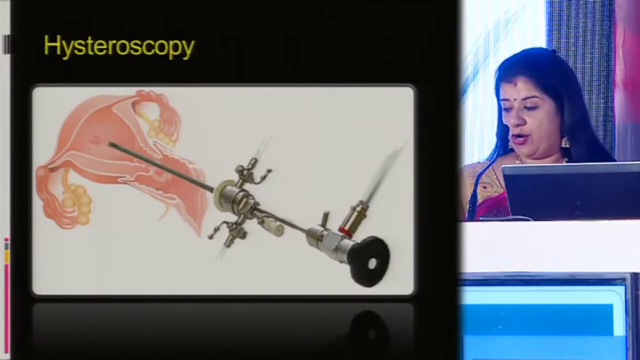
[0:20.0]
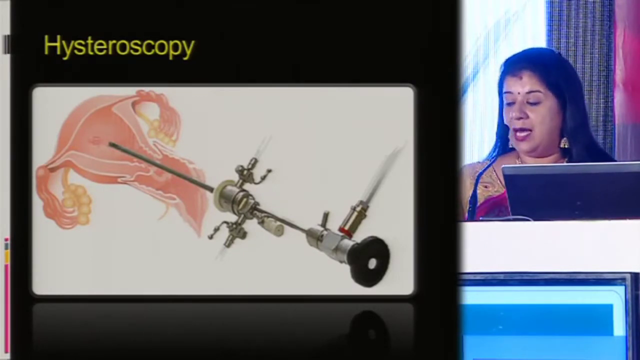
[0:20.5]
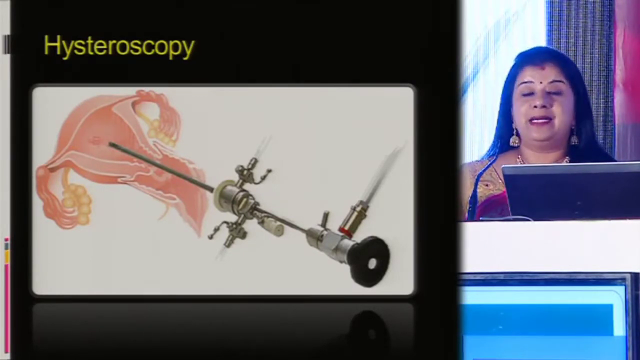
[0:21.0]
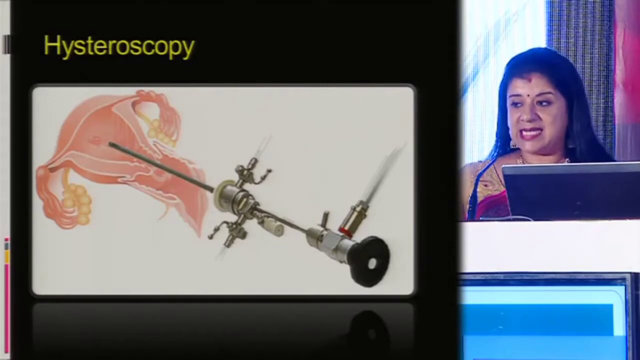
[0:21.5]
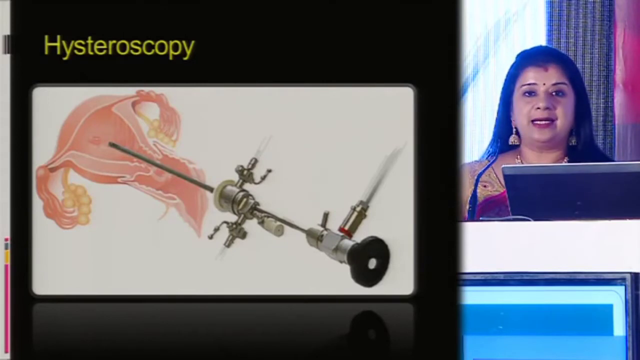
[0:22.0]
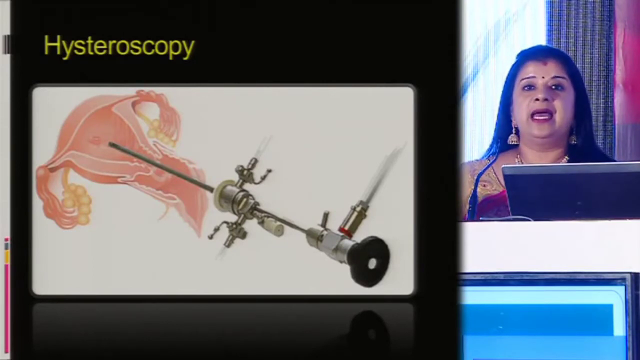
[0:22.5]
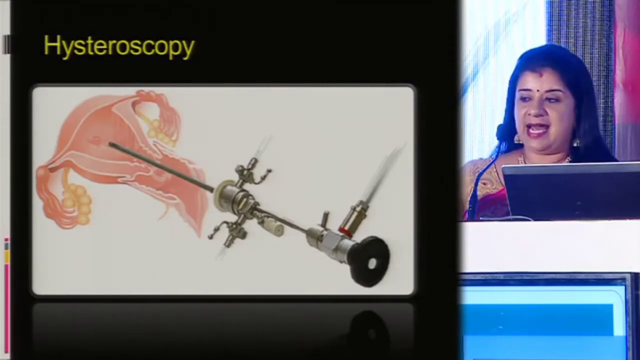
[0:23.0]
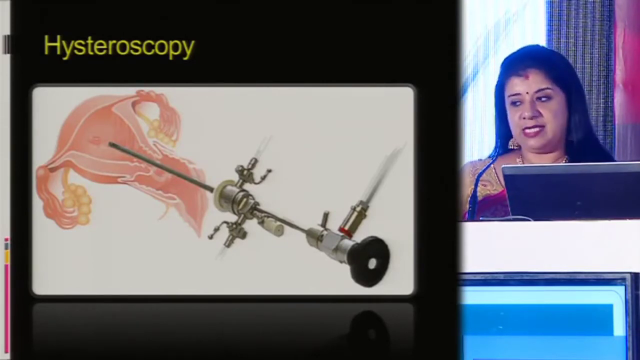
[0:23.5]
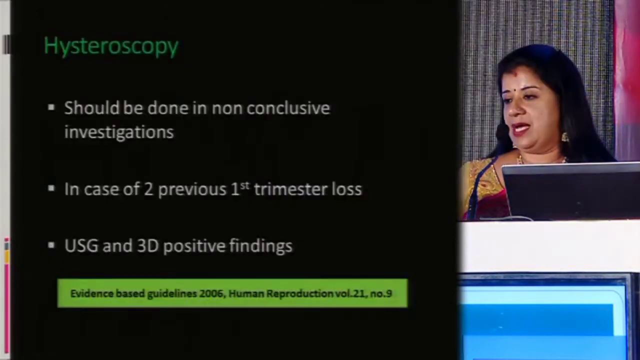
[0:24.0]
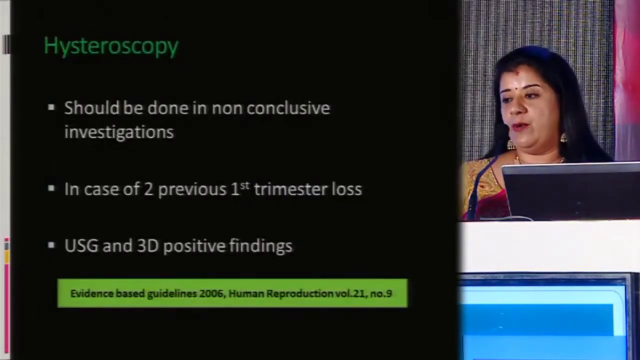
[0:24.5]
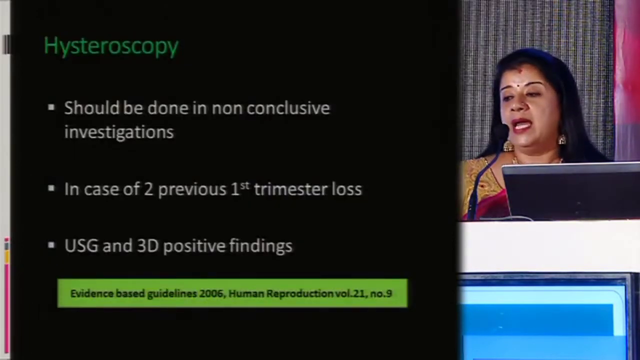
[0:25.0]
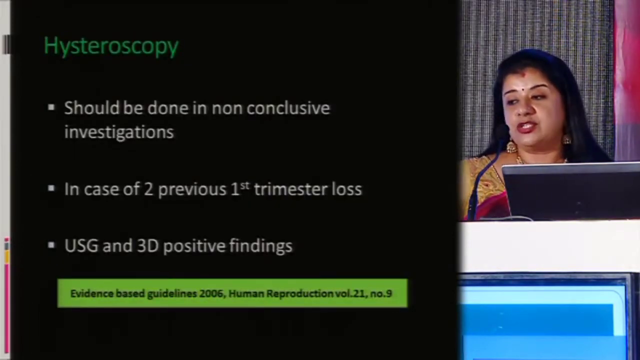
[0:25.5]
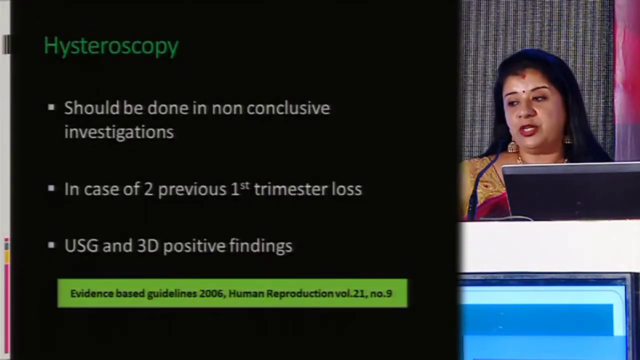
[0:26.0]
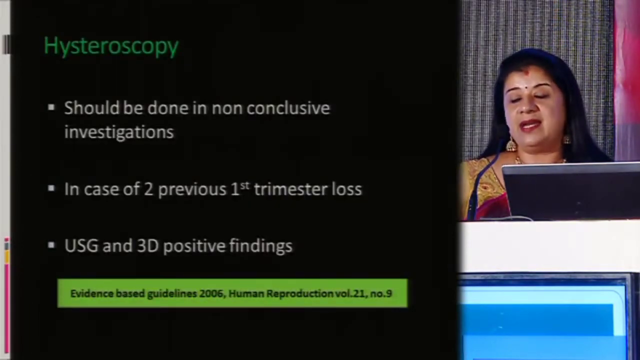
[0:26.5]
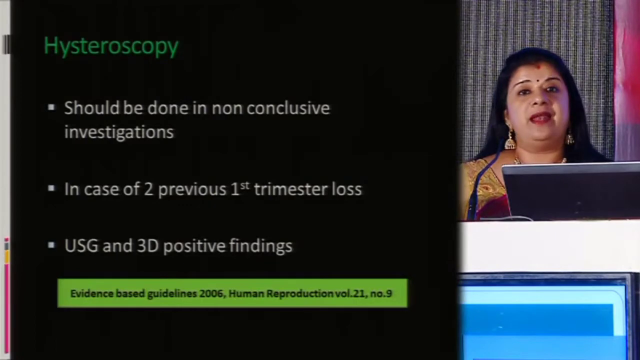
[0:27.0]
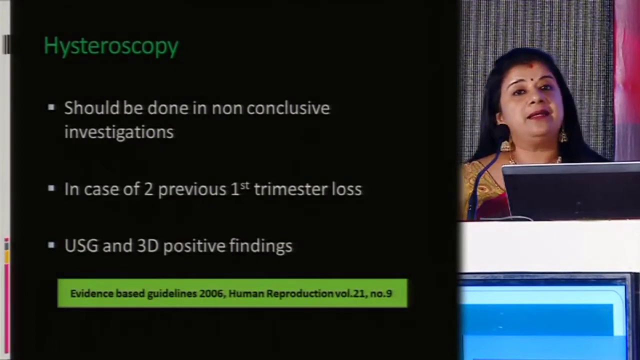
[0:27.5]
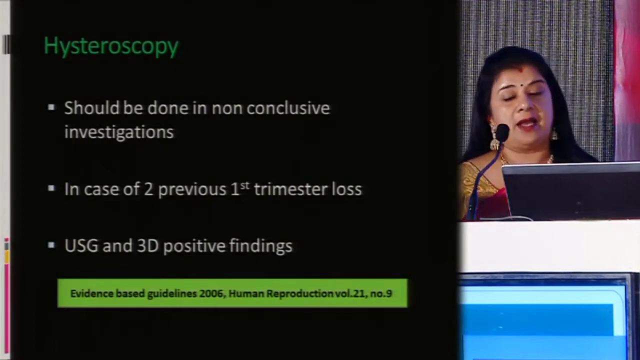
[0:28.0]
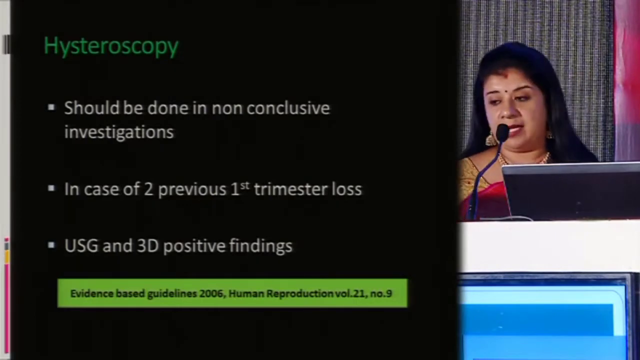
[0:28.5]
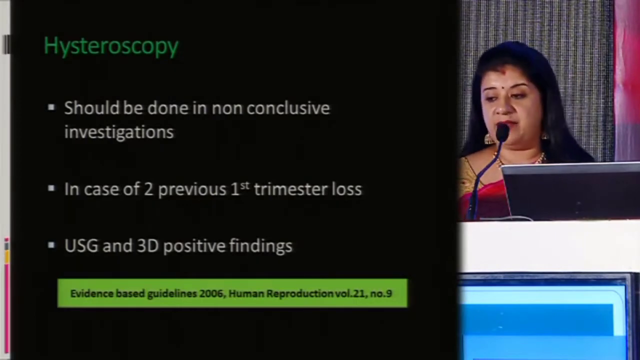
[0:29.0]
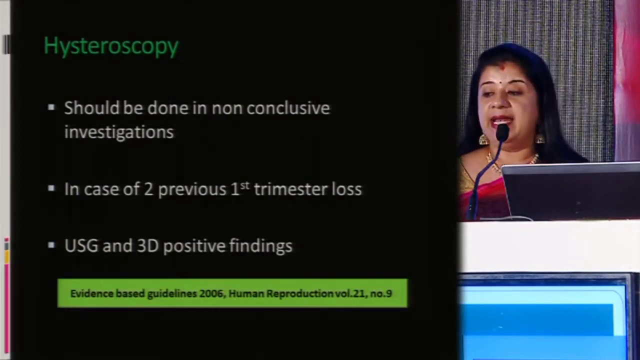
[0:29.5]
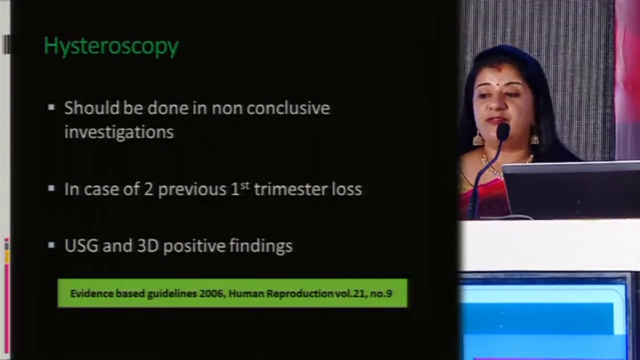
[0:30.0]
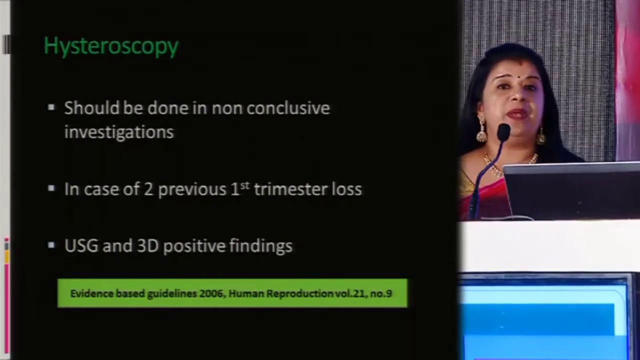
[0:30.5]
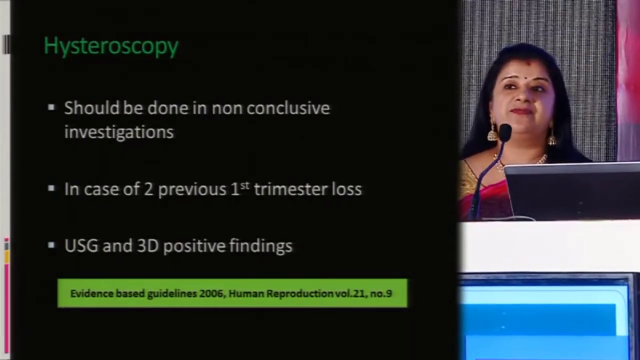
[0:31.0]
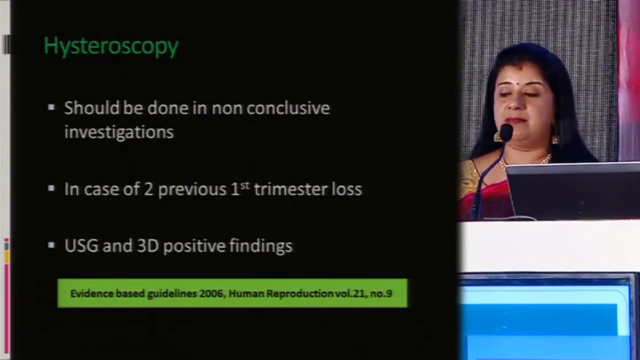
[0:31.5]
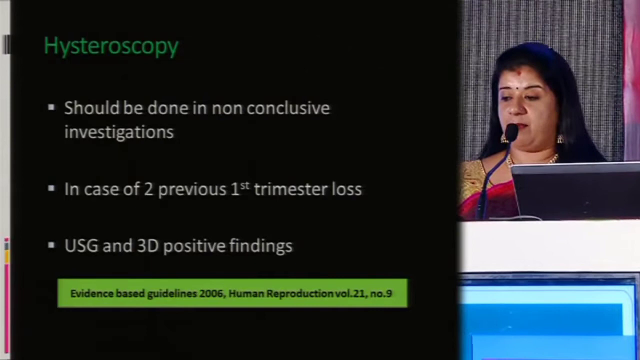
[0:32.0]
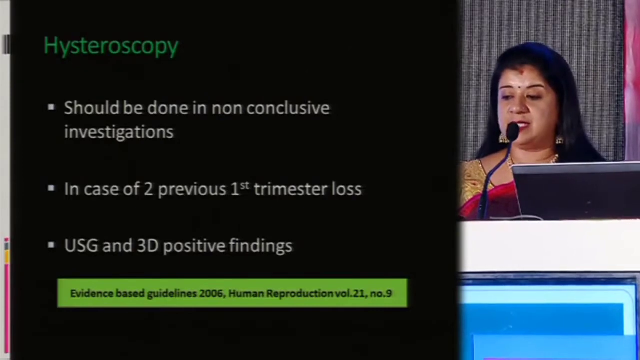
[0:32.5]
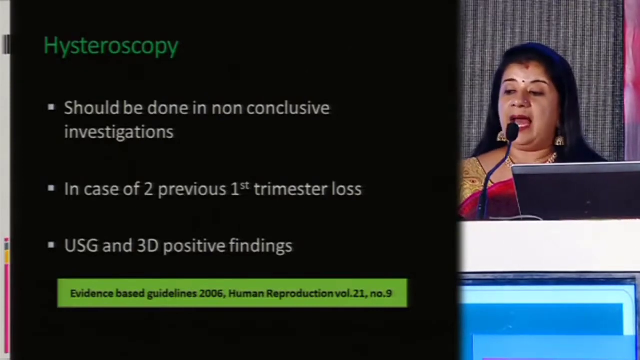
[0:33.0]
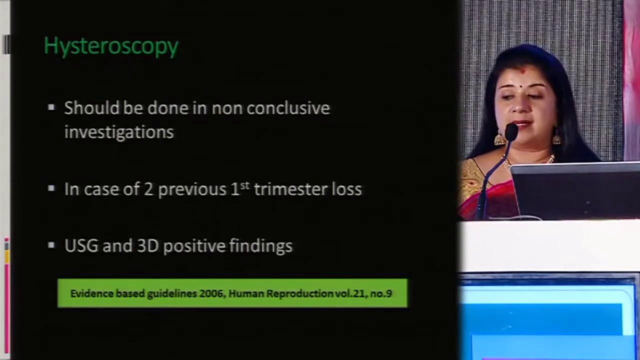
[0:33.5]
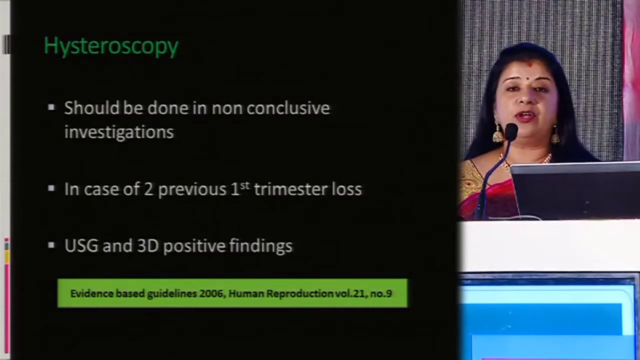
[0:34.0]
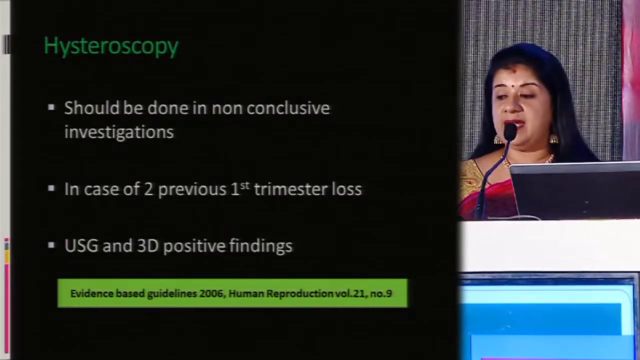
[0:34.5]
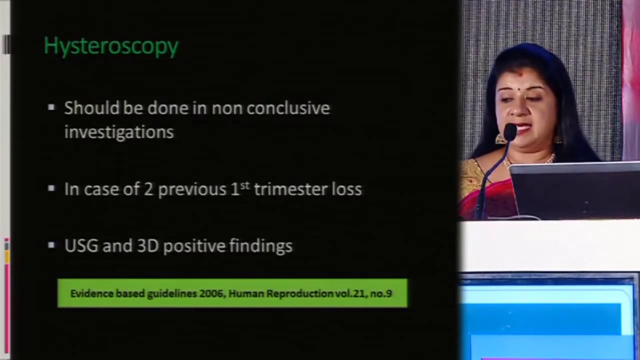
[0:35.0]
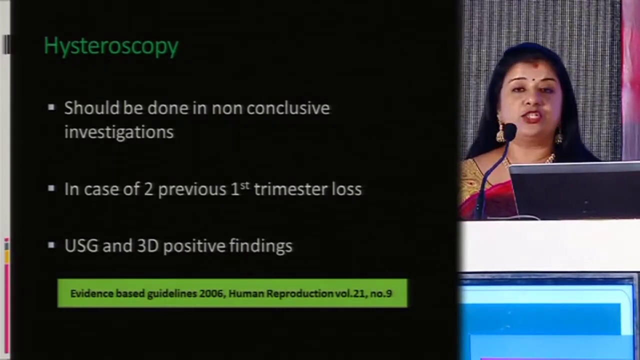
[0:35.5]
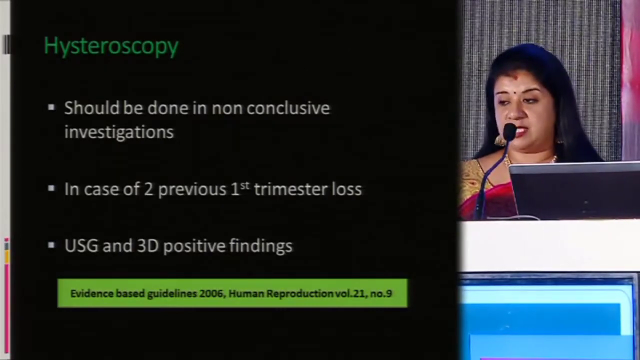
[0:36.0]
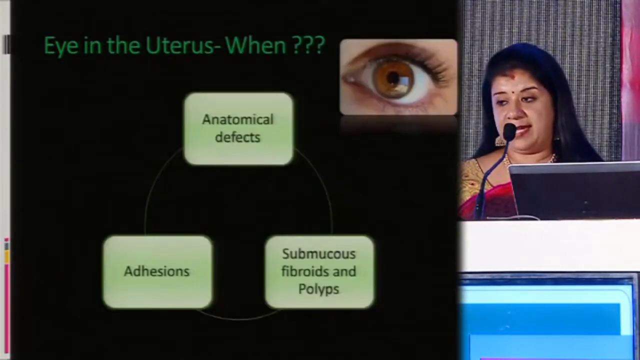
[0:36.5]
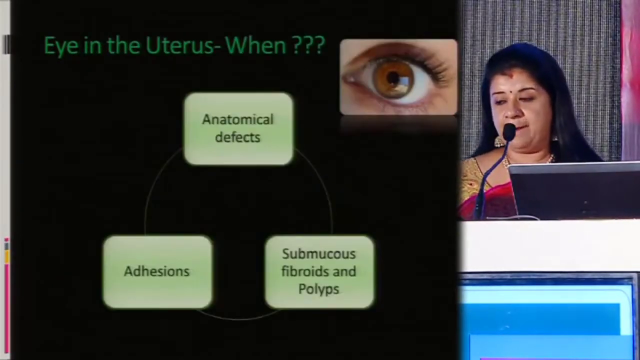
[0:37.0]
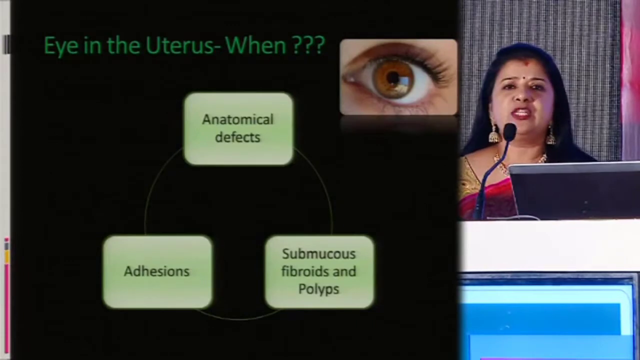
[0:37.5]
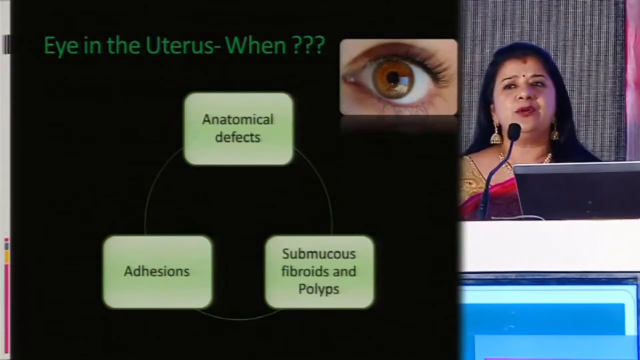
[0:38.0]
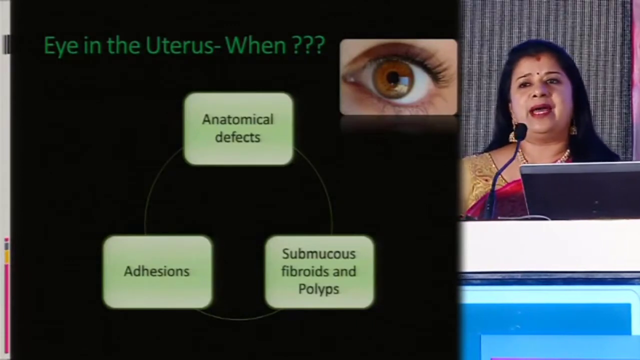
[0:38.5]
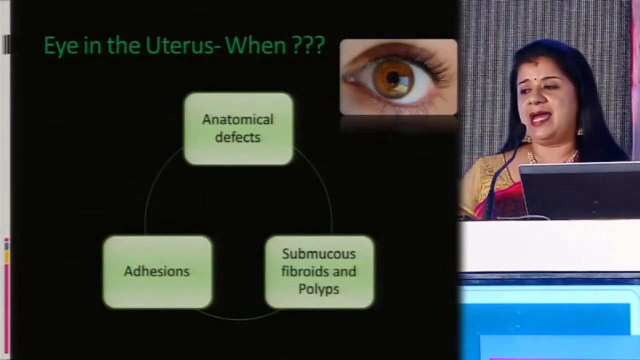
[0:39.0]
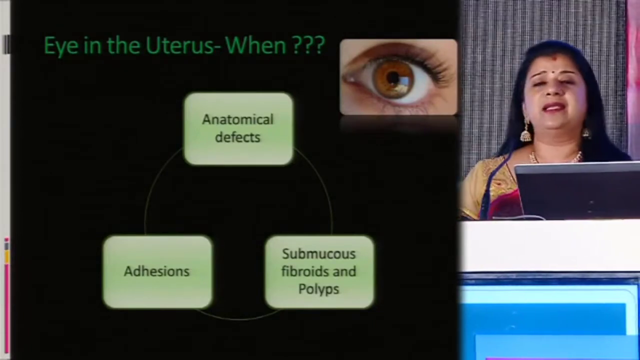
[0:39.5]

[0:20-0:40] A woman stands behind a computer with a microphone in front of her. To her left is what appears to be a PowerPoint or some sort of slide, with "Hysteroscopy" at the top. The slide has an image containing clip art of the uterus and what appears to be a metal device with a black top and different cylinders on it. At the end of the device is what appears to be a long needle-like attachment, which is shown being inserted into the uterus in the image. While the image is presented, the woman is visibly speaking. The slide then changes to show three bullet points: "should be done in non-conclusive investigations," "in case of two previous first trimester loss," and "USD and 3D positive findings."